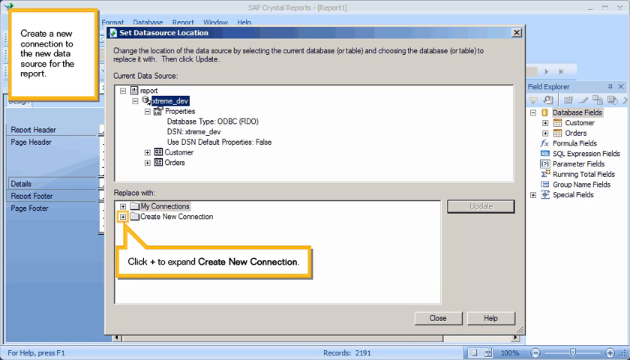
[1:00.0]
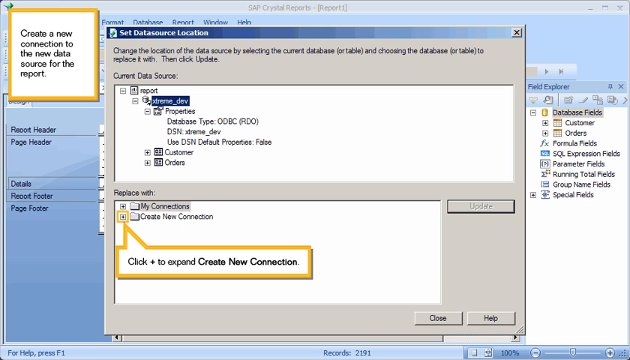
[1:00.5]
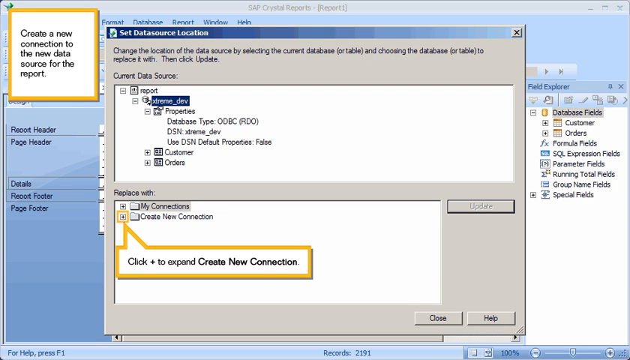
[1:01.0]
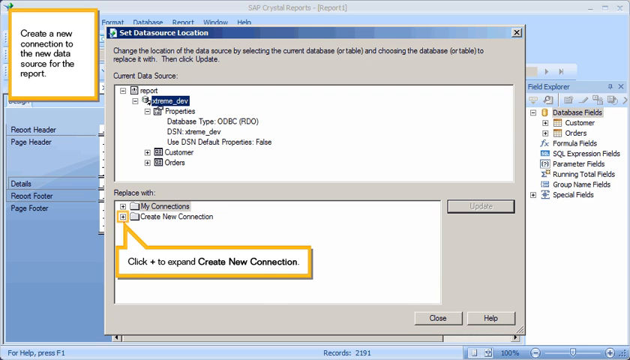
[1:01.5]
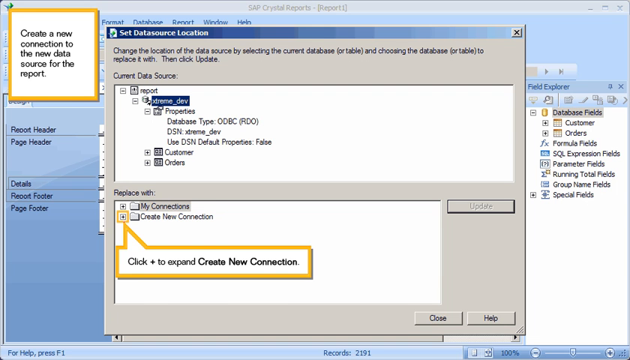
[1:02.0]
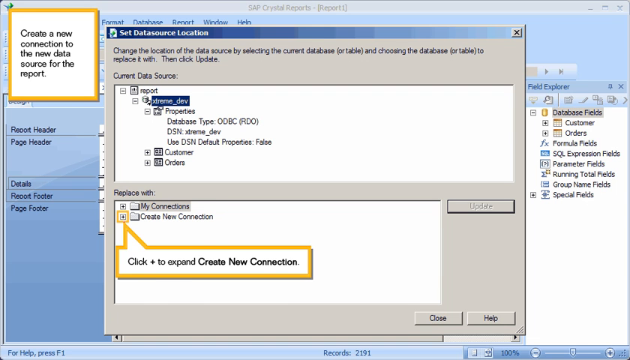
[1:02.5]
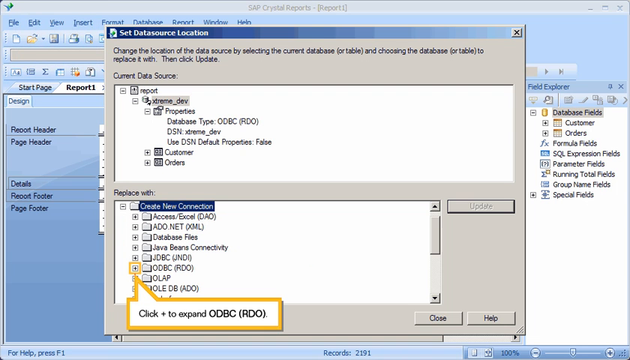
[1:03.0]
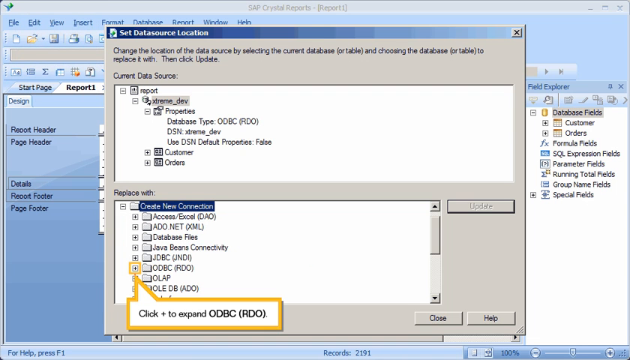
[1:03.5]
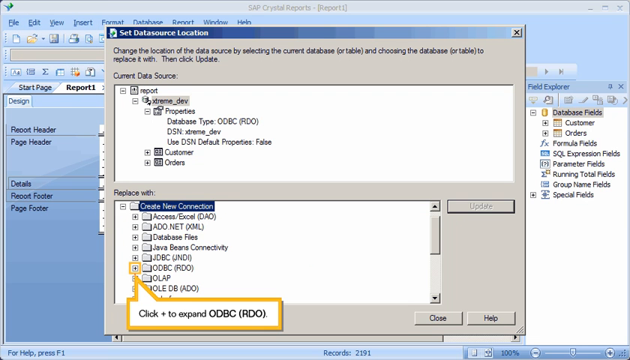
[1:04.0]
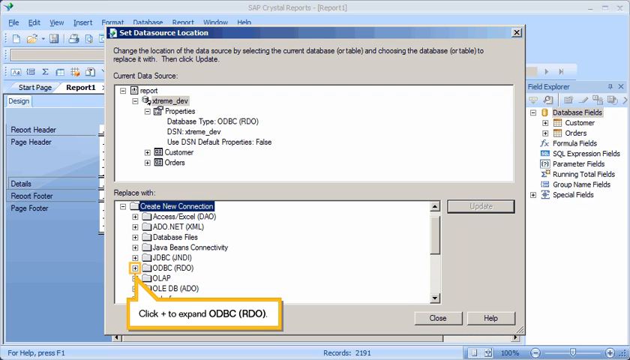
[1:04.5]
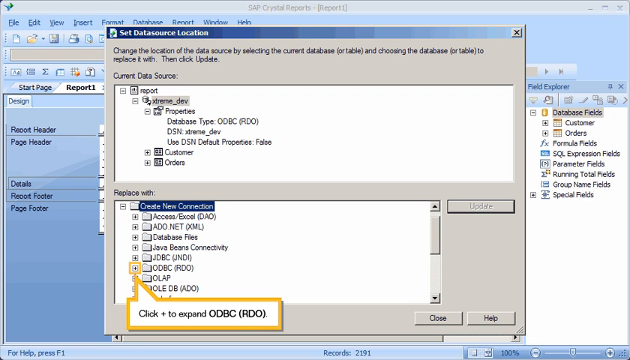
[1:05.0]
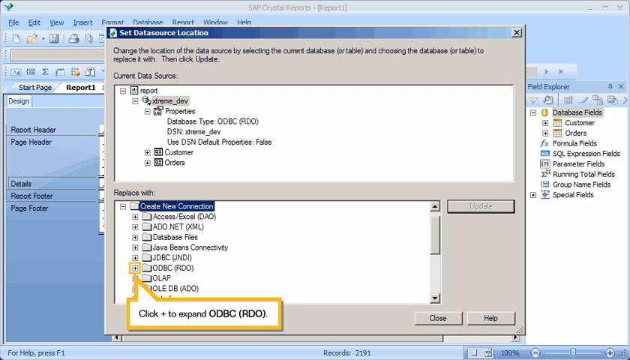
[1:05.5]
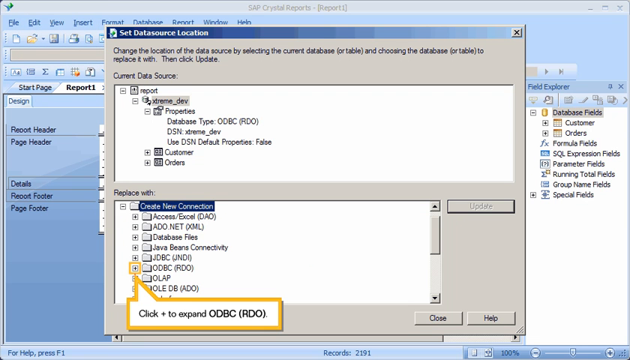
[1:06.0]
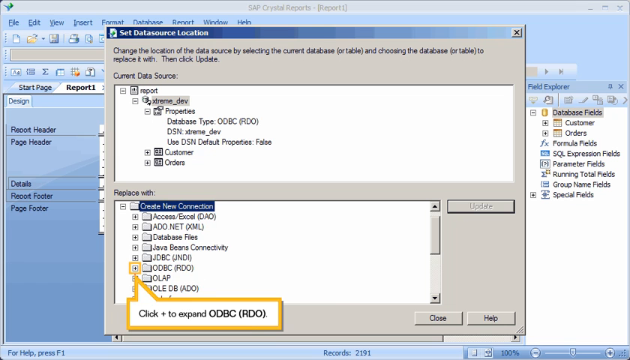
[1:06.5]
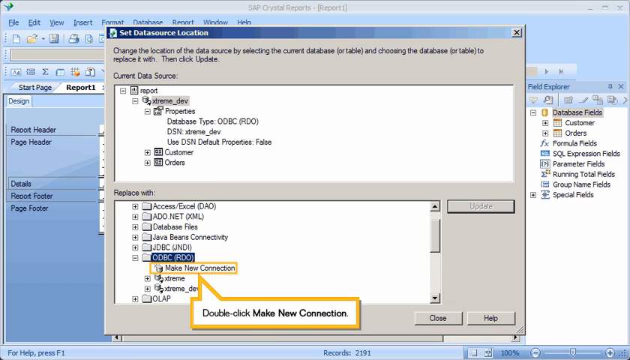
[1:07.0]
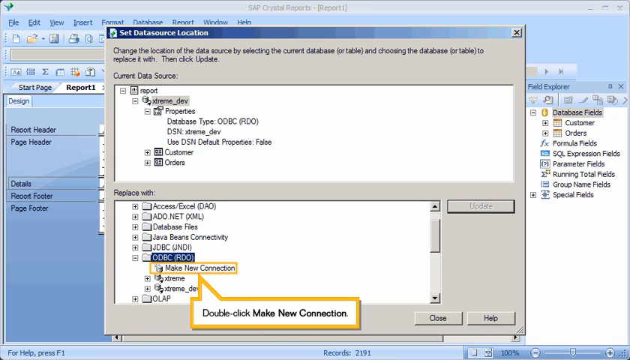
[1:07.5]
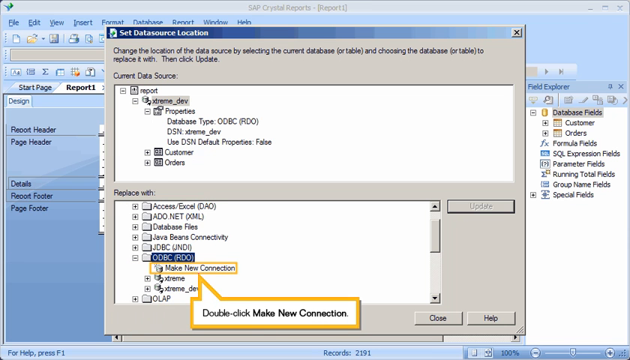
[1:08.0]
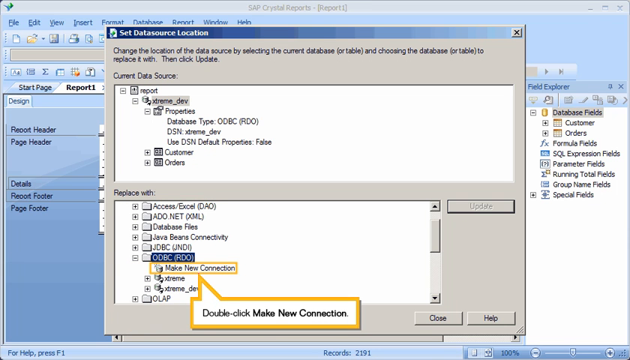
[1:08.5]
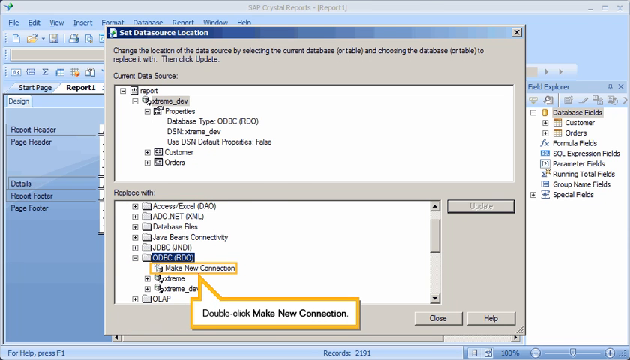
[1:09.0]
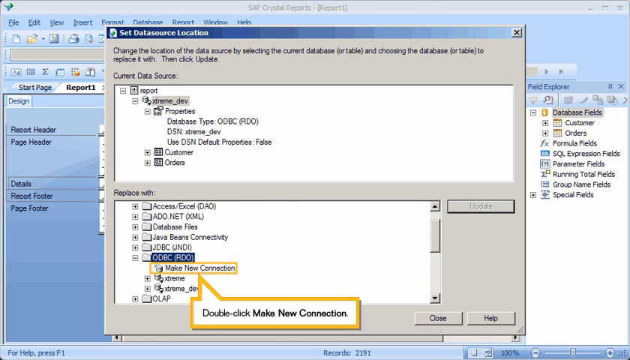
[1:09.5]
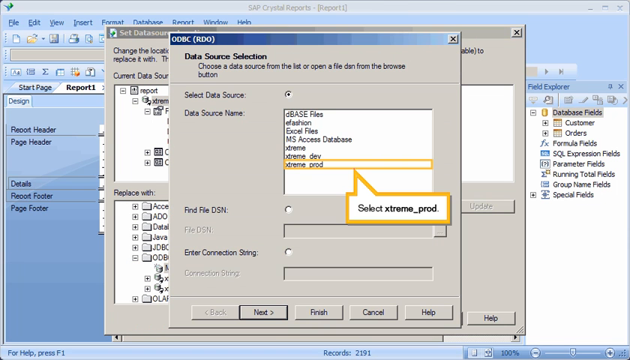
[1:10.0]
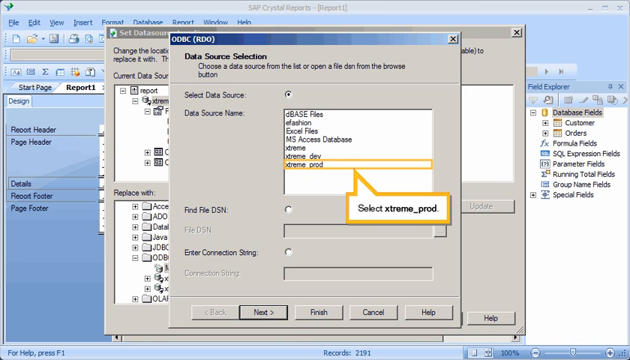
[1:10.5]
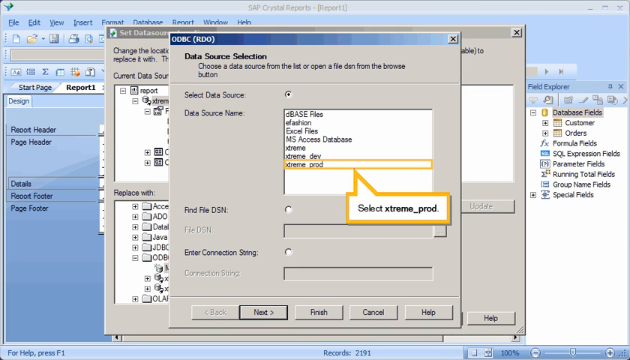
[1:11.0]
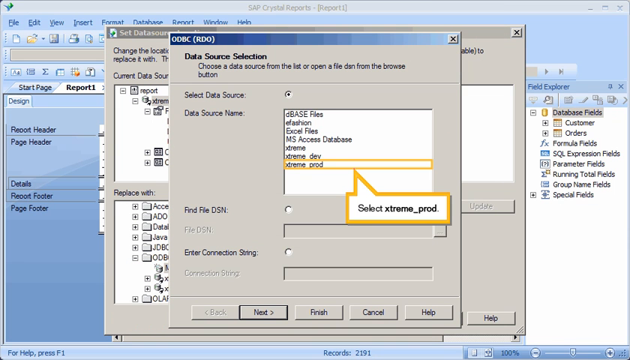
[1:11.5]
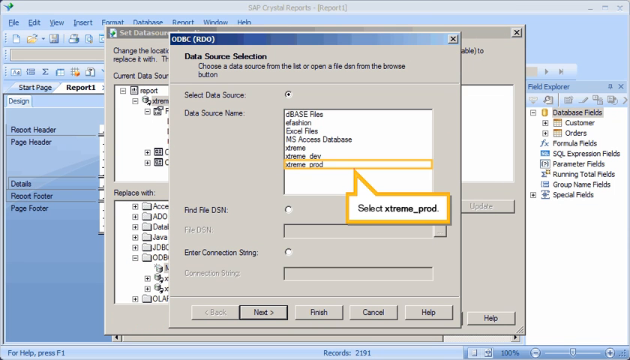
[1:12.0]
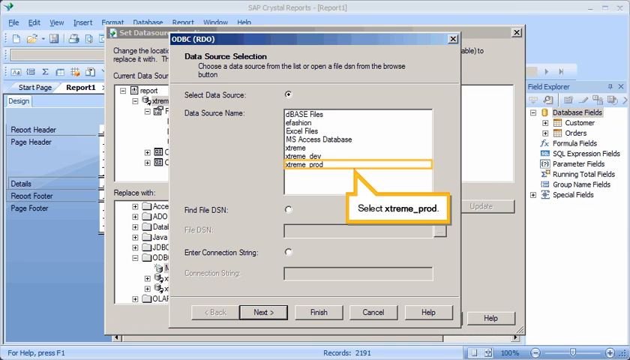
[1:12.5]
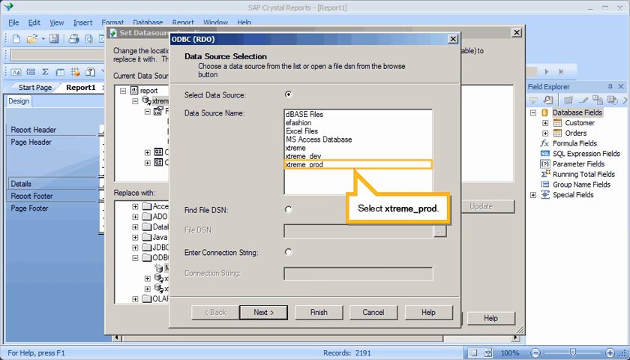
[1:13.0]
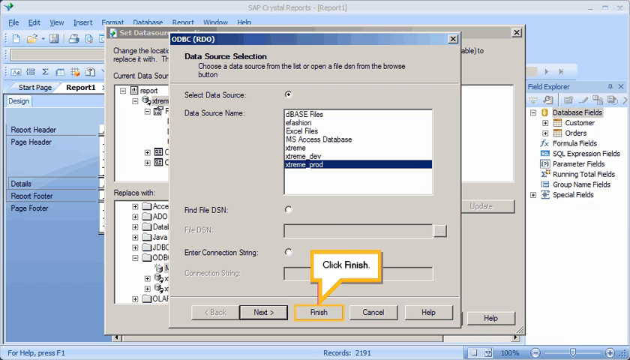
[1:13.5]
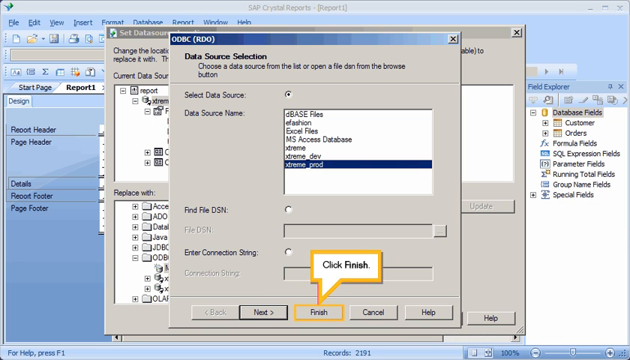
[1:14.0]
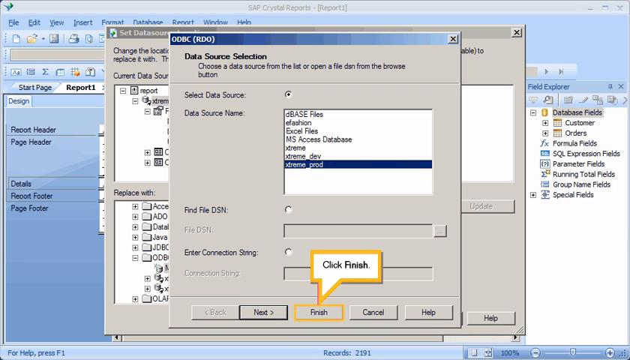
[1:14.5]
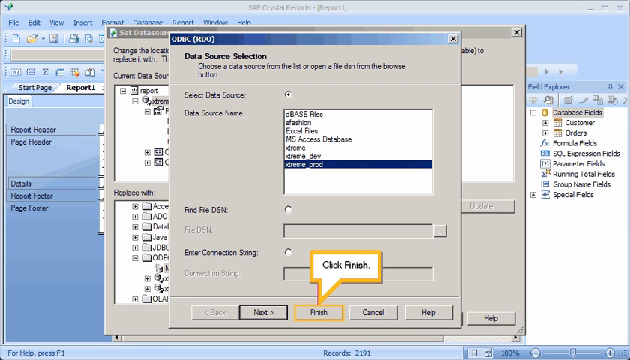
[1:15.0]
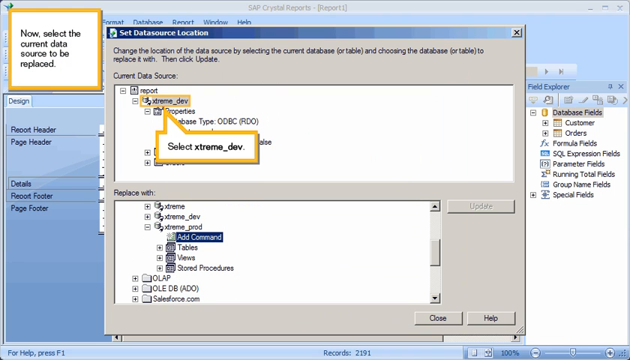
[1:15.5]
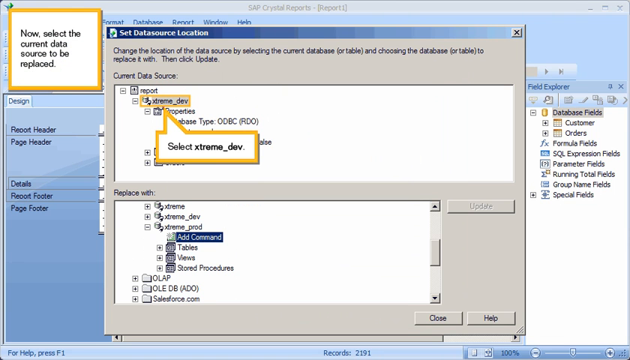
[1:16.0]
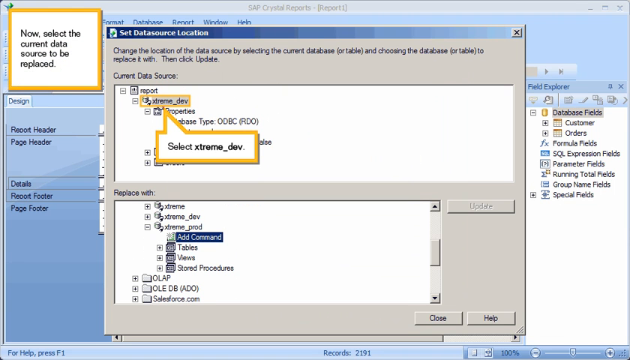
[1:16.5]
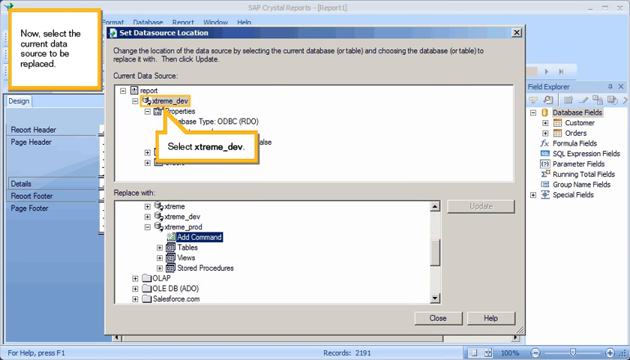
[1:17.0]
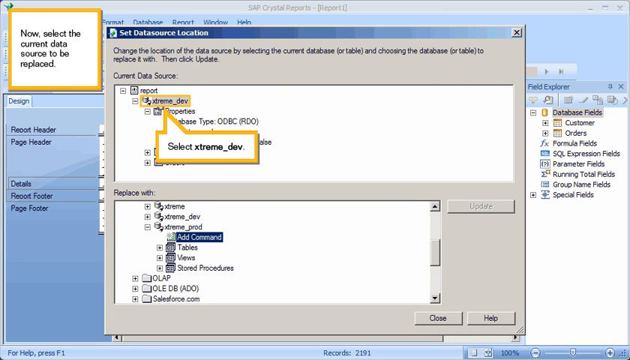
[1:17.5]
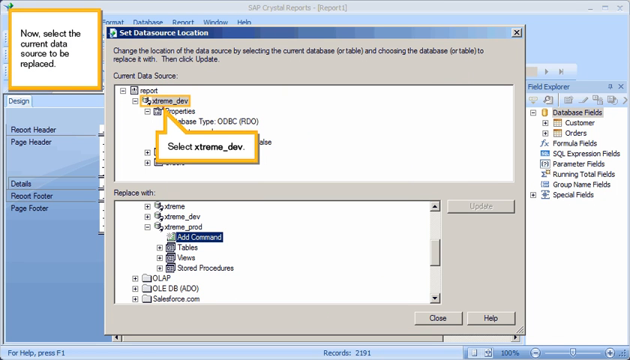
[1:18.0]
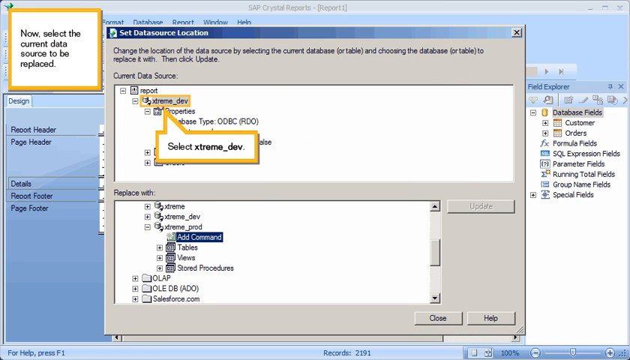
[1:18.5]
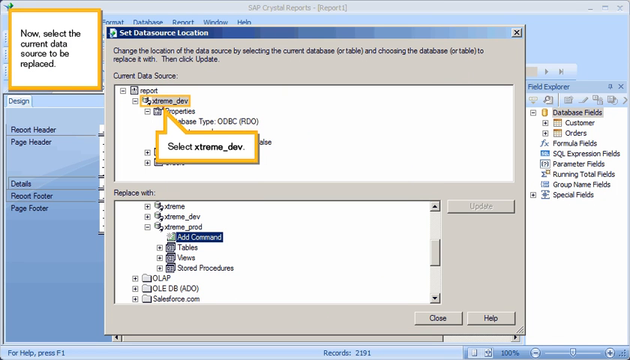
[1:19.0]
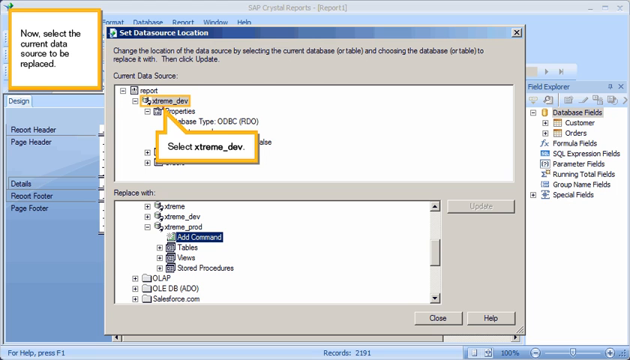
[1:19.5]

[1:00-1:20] The tutorial continues. The yellow-framed text box in the upper left corner says "create a new connection to the new data source for the report." The program's dialog box is titled "Set Data Source Location." A dialog box framed in yellow says "click to expand, create new connection," and the mouse clicks to expand it. More subsets of data appear, and a new yellow-framed box says "click to expand" with the letters O, D, B, C; the mouse clicks again. The box then says "double click, make new connection." A new gray dialog box opens listing dbase files, something illegible, Excel files, MS Access database, extreme, extreme dev, and extreme prod. Extreme prod is highlighted and framed in yellow, and a box below says "select extreme prod." Then a white box framed in yellow opens that says "click finish."